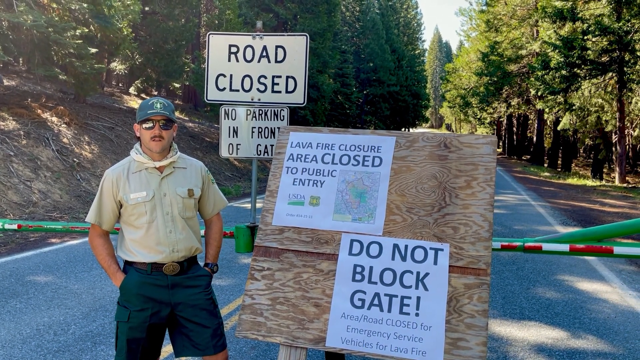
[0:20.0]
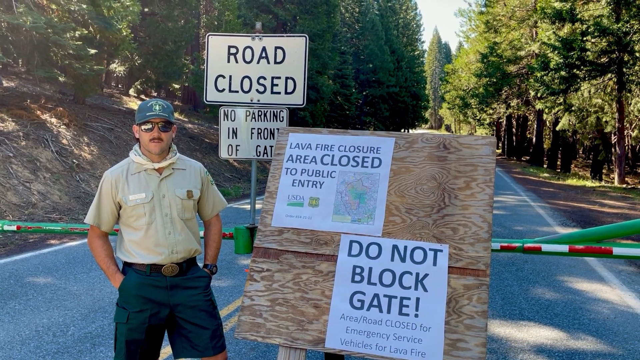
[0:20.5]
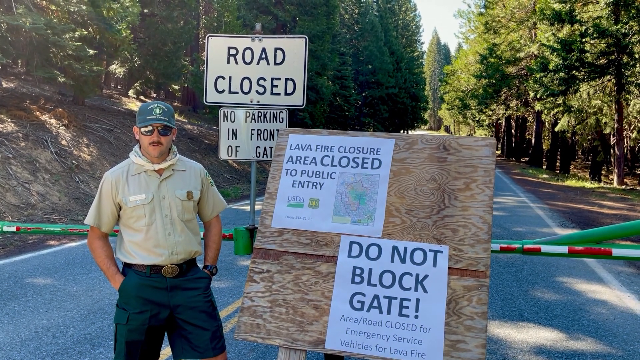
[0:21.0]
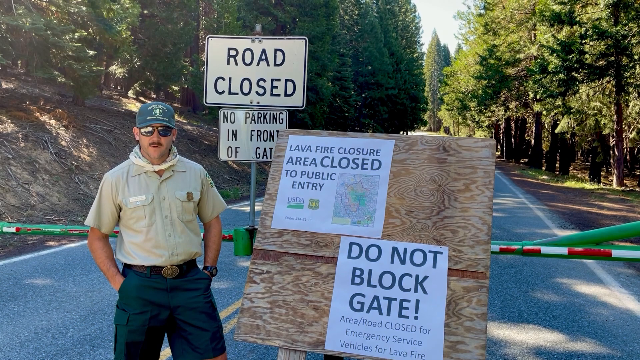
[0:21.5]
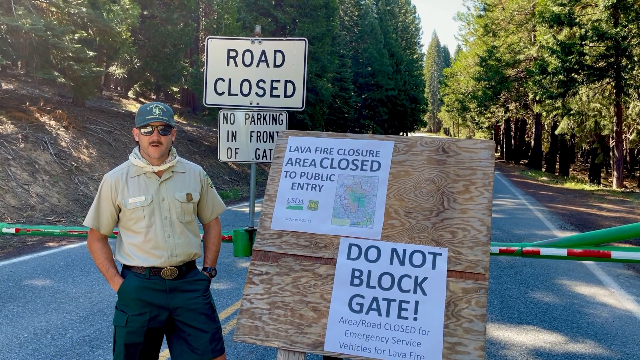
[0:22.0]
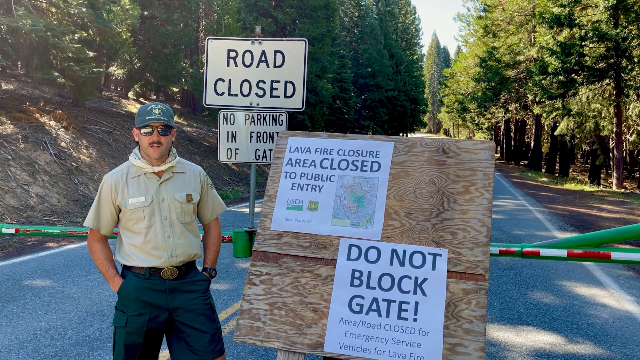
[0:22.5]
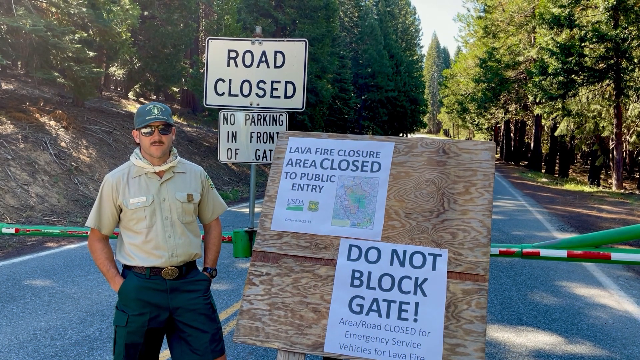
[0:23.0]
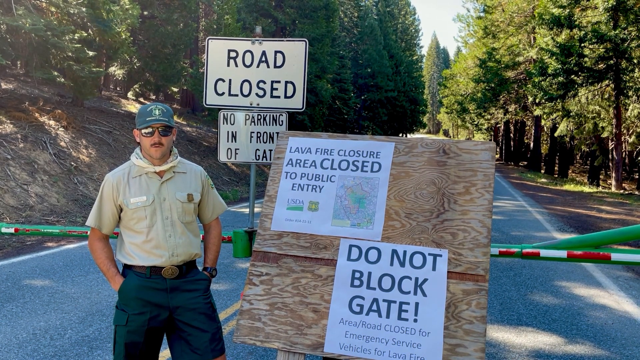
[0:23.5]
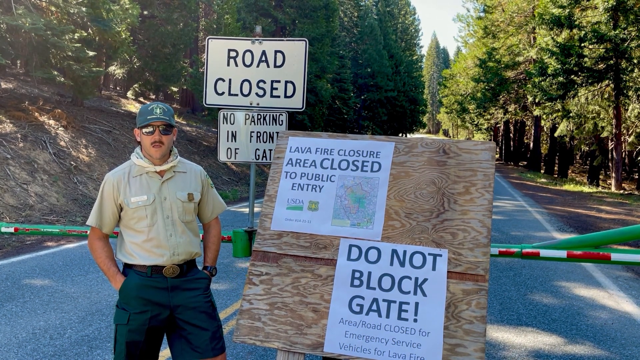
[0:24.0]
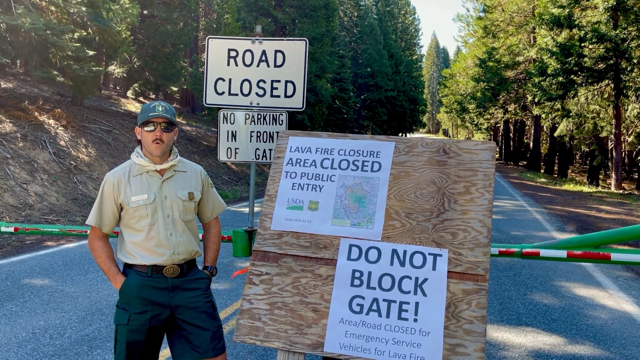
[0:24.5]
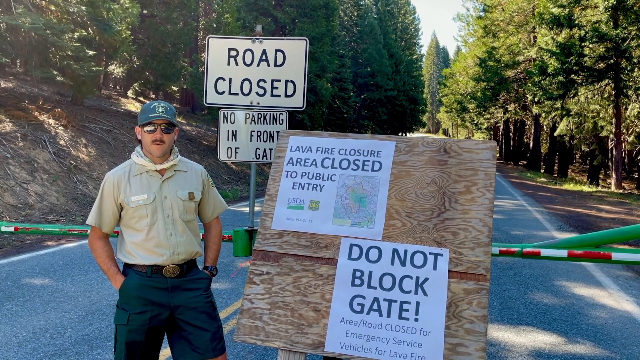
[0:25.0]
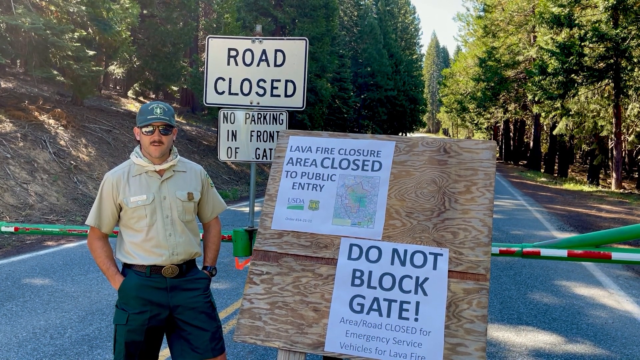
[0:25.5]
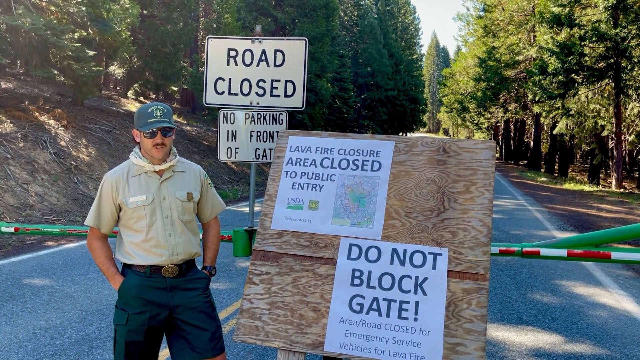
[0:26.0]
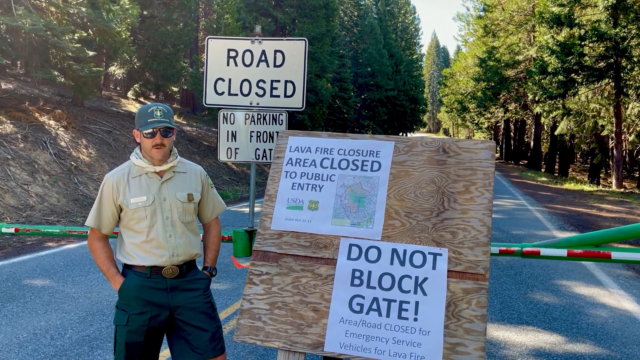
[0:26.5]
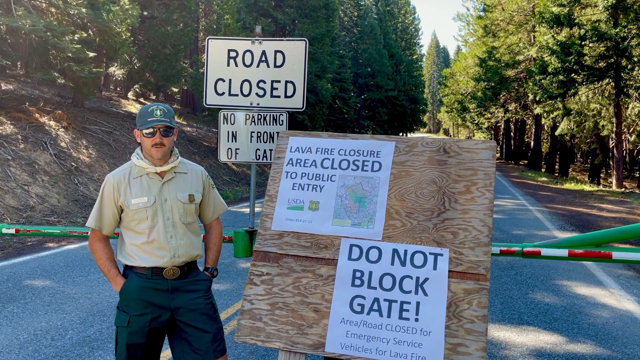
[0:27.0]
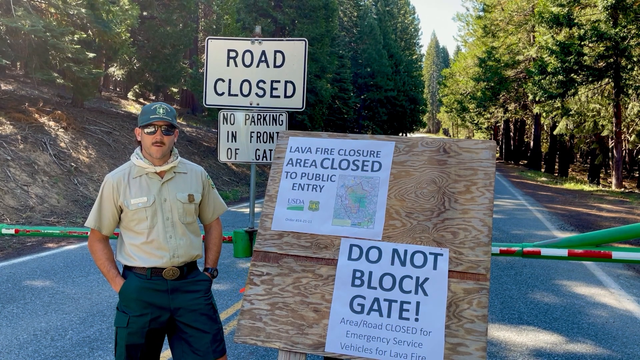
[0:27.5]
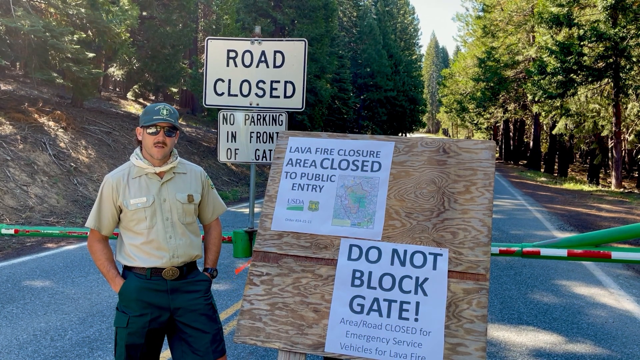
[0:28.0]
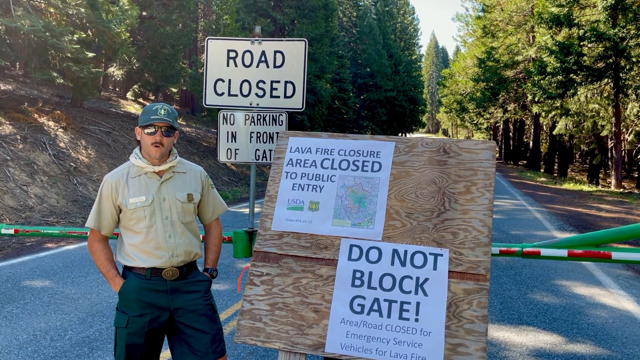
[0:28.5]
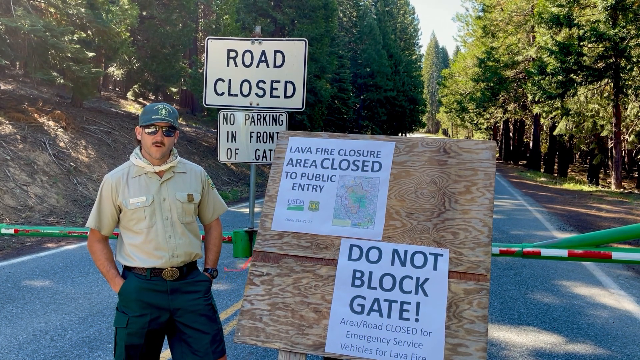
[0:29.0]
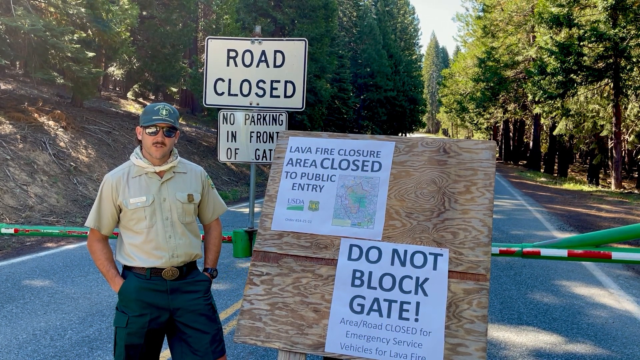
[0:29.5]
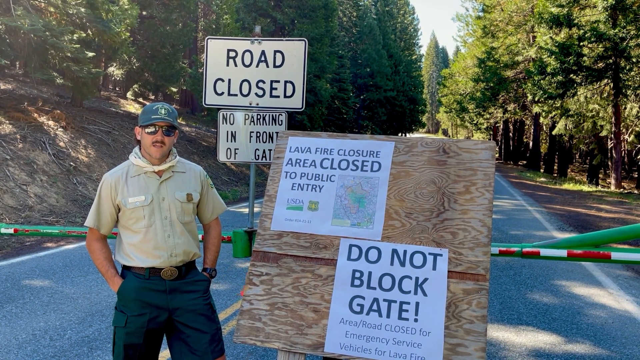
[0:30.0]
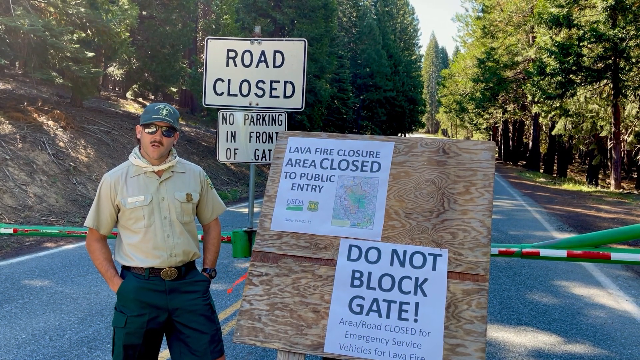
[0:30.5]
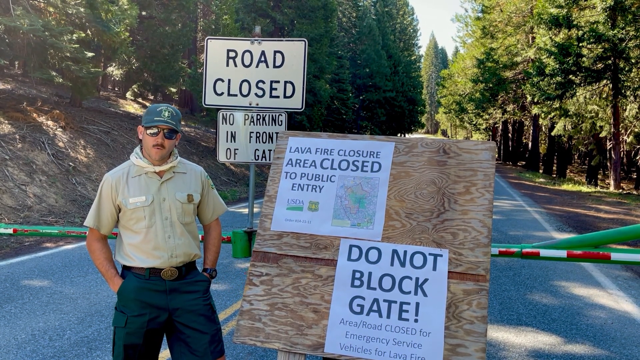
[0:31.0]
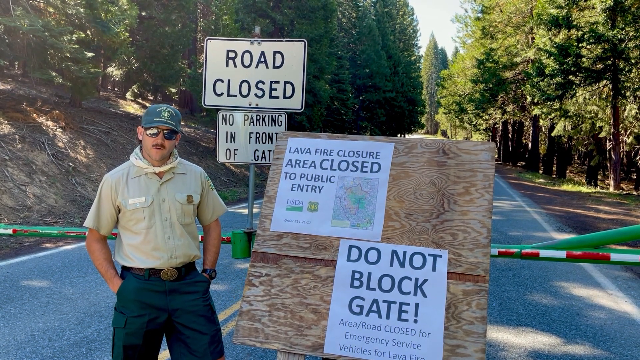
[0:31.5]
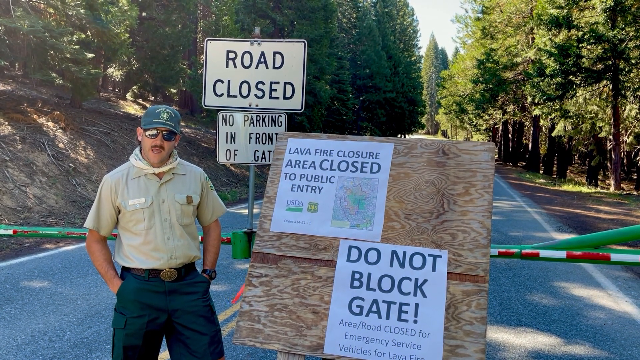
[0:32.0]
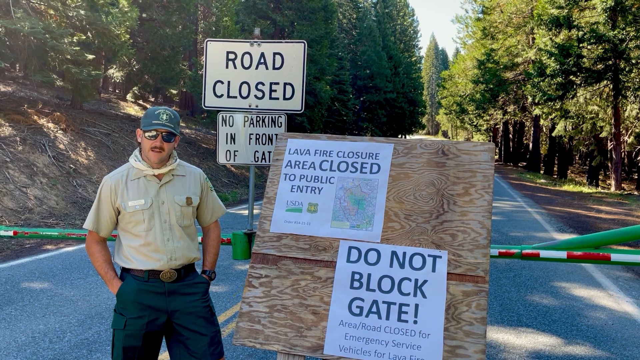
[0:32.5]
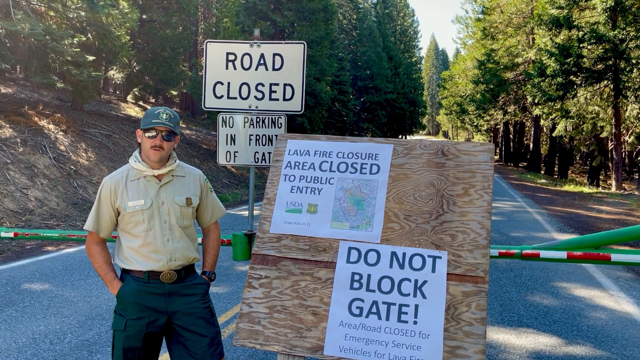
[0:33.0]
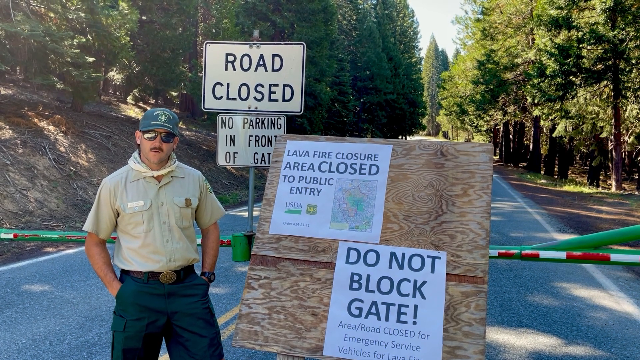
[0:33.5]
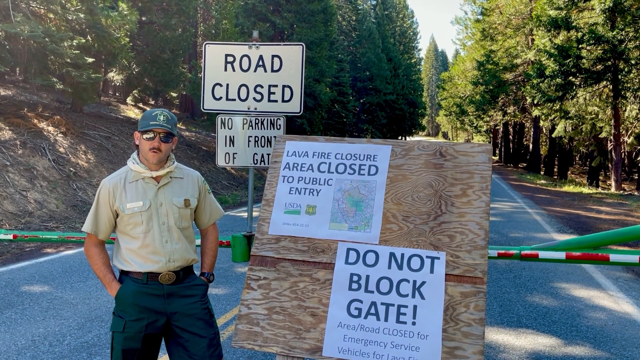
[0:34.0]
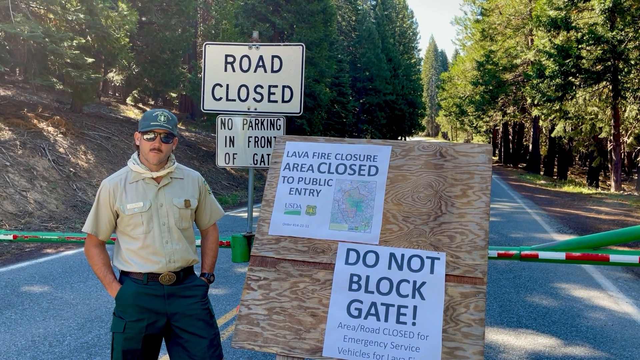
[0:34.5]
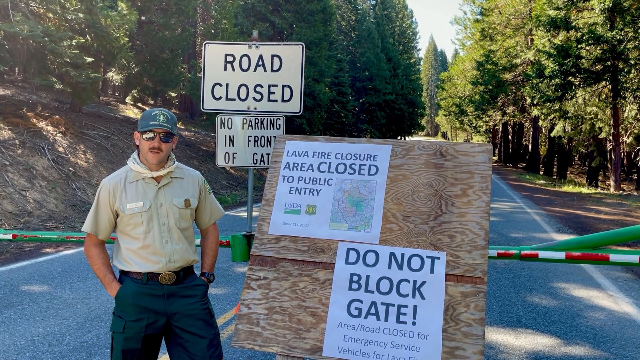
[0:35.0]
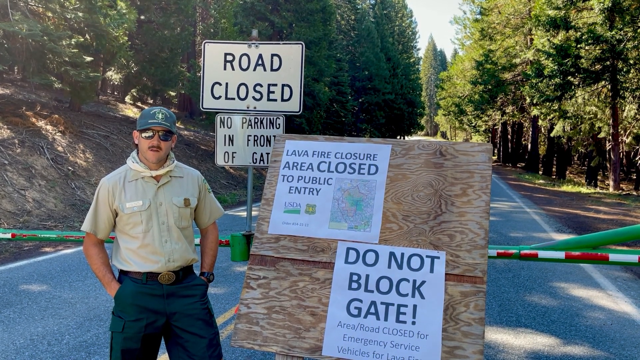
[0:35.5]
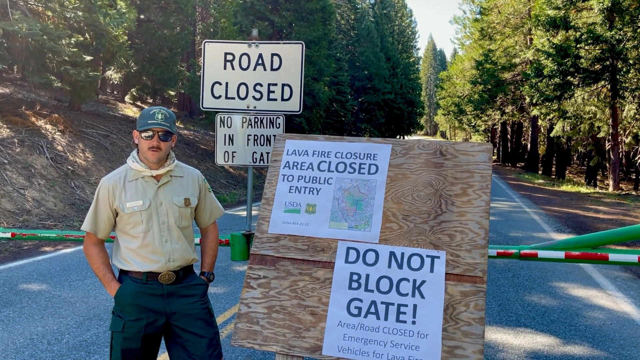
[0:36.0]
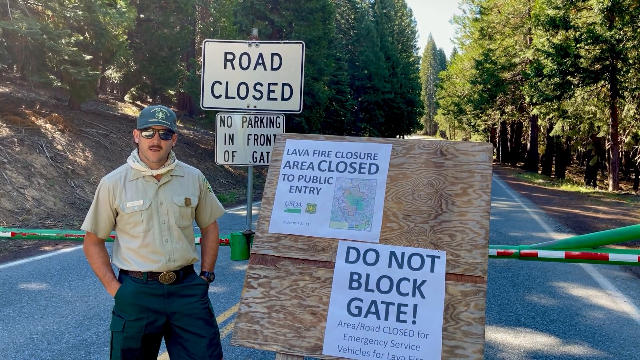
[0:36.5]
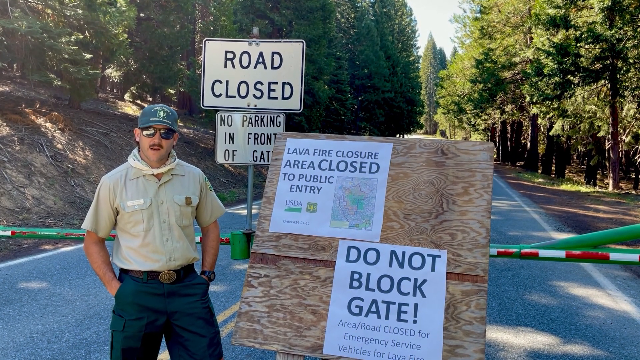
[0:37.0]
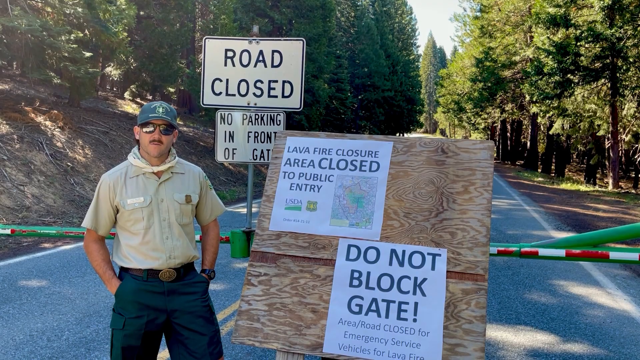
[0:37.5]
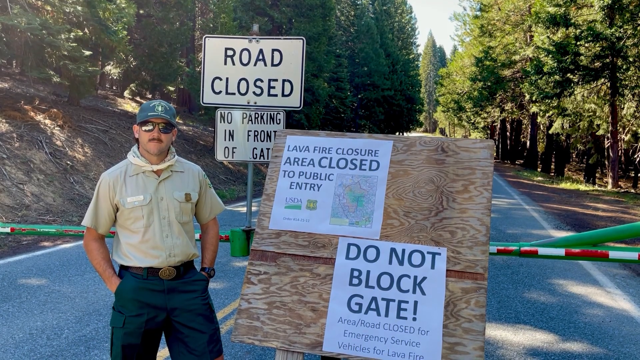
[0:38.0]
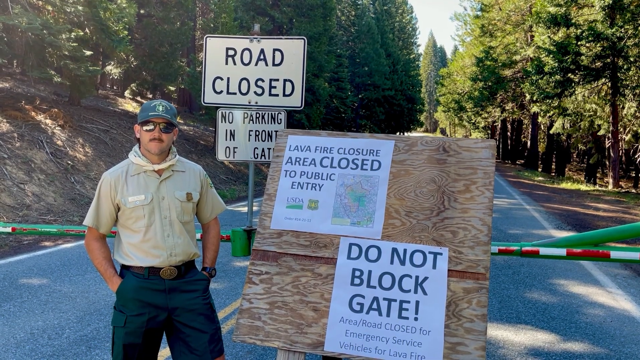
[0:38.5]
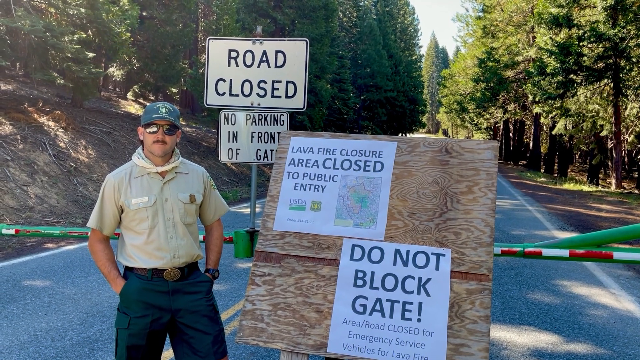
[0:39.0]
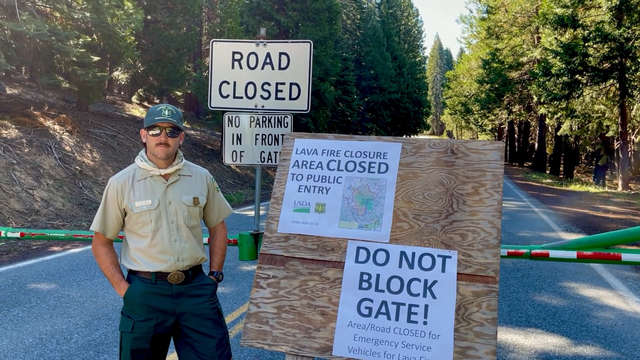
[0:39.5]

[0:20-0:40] A man wearing a beige shirt, green shorts, a black belt, sunshades and a green cap appears to be perhaps a forest ranger or maybe police. He stands in front of a wooden sign with various posters on it, one of which says "lava fire closure, area closed to public entry" and shows the details of a map. Beneath it, another sheet of paper pinned to the same wooden board says "do not block gate." Behind that, tape runs across the stretch of road he is blocking, and several signs have been erected, one of which reads "road closed, no parking in front of the gate." His mouth is opening and closing, and he is probably speaking to the person filming.